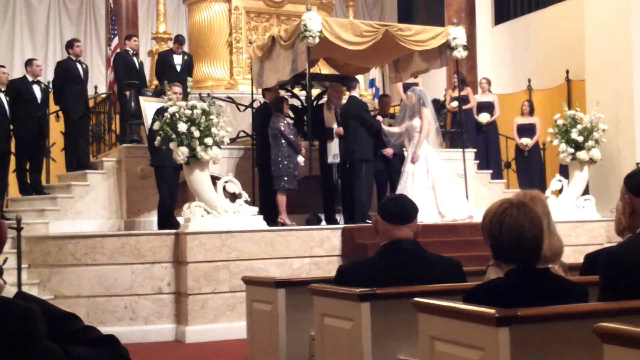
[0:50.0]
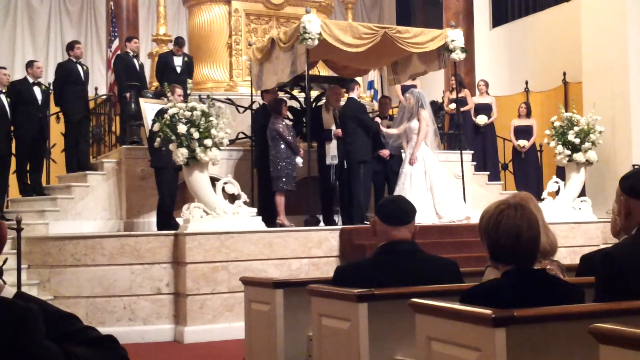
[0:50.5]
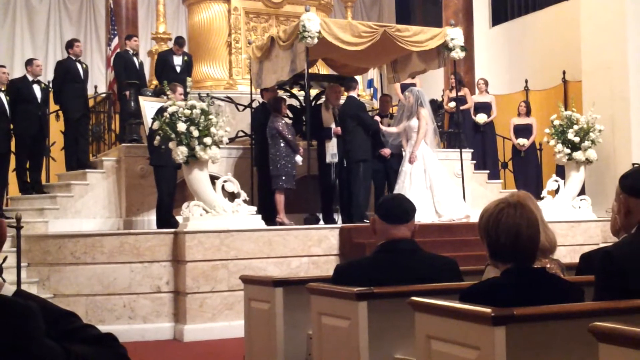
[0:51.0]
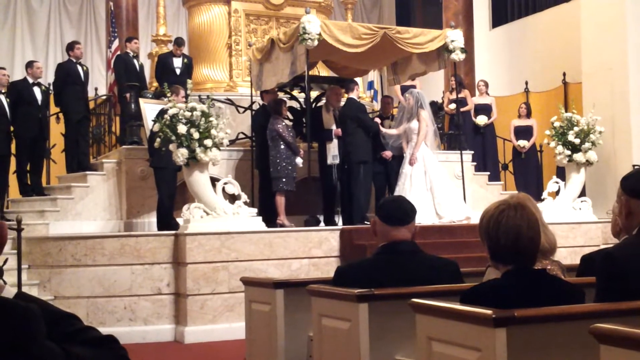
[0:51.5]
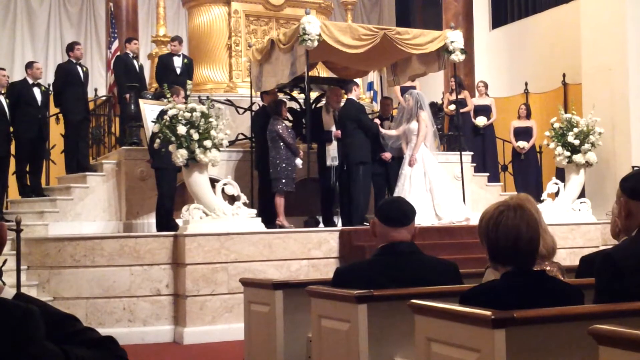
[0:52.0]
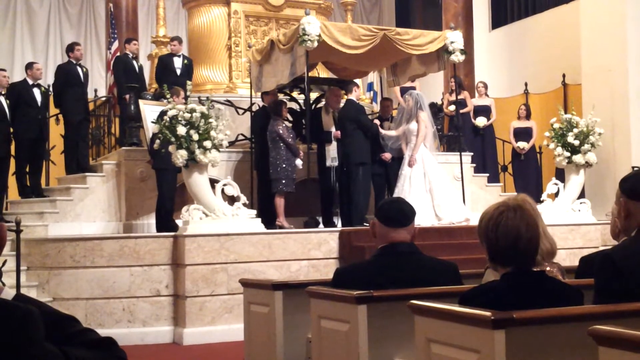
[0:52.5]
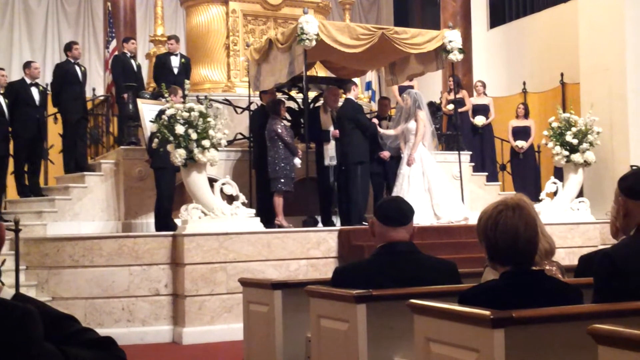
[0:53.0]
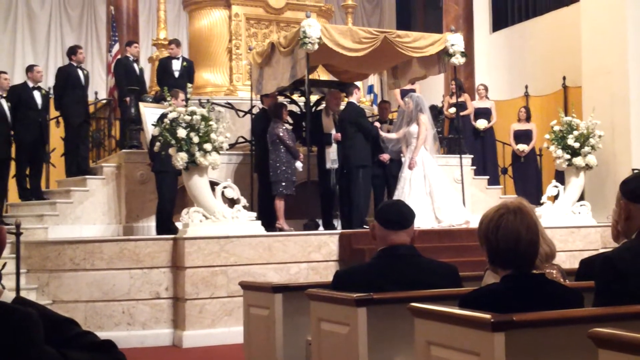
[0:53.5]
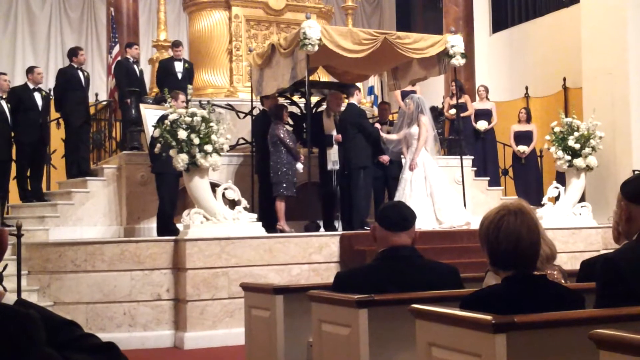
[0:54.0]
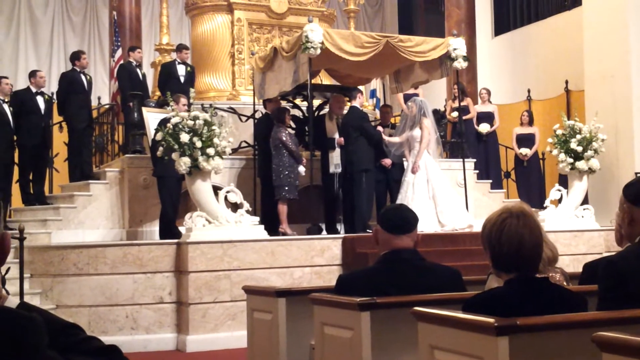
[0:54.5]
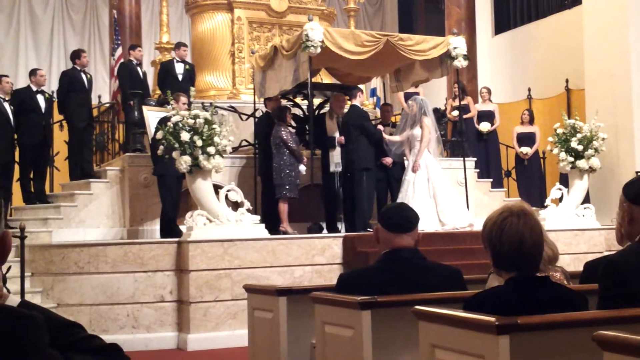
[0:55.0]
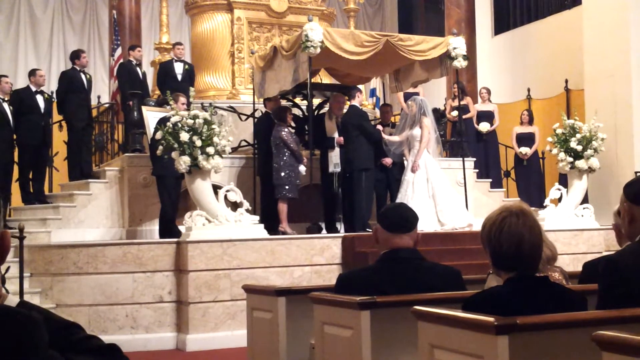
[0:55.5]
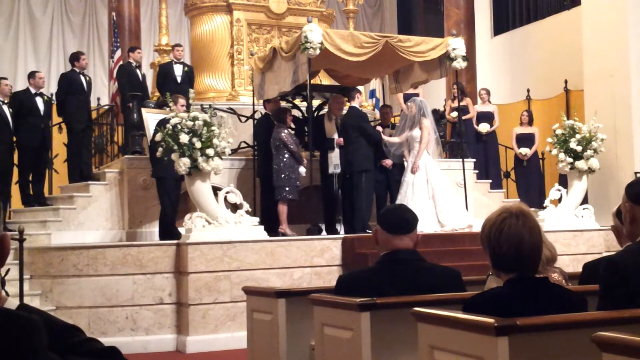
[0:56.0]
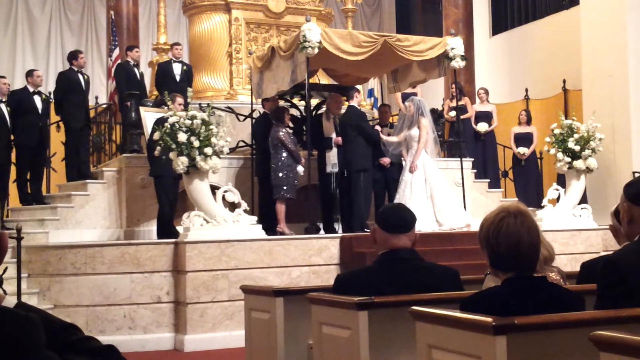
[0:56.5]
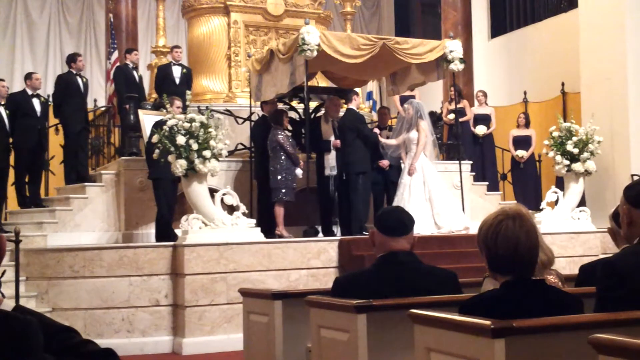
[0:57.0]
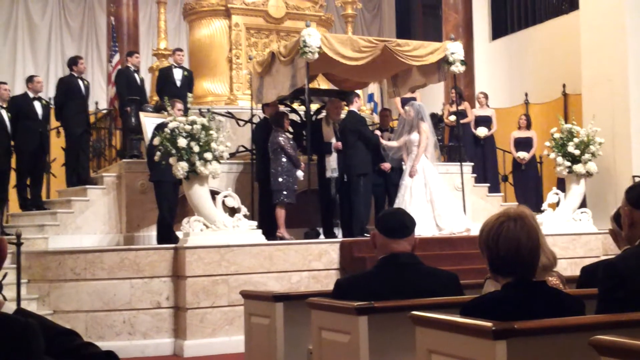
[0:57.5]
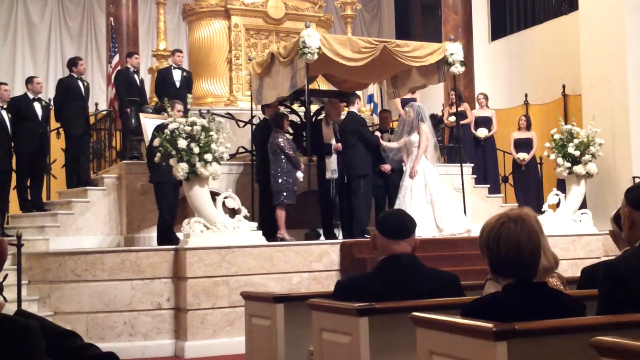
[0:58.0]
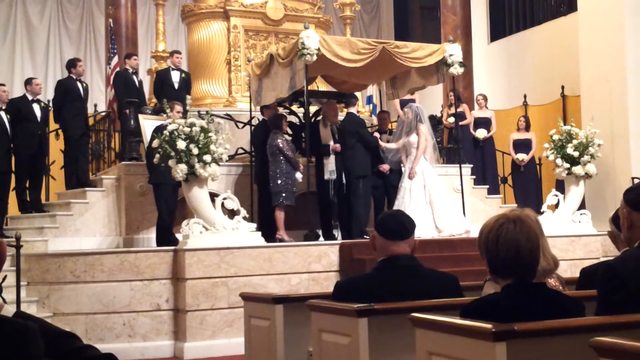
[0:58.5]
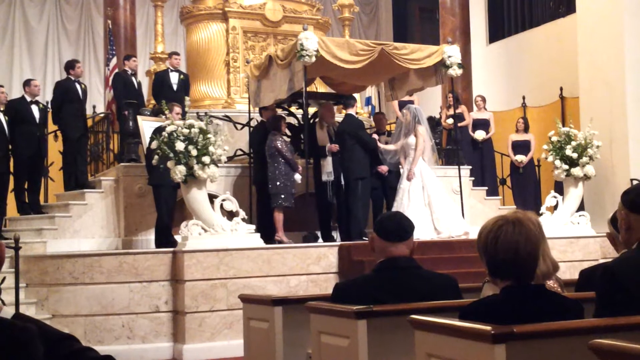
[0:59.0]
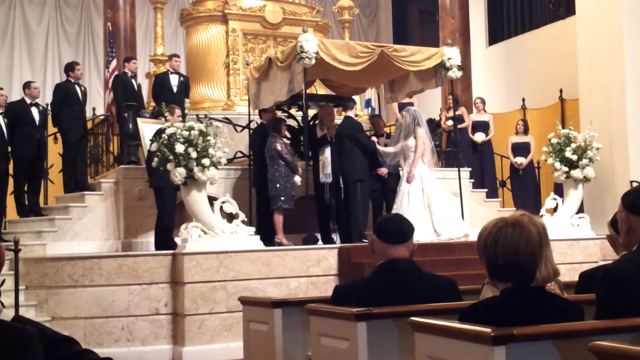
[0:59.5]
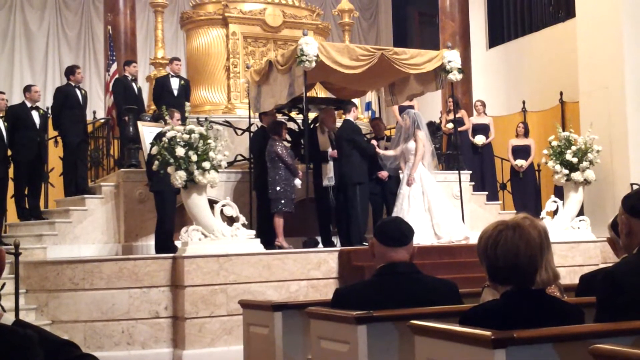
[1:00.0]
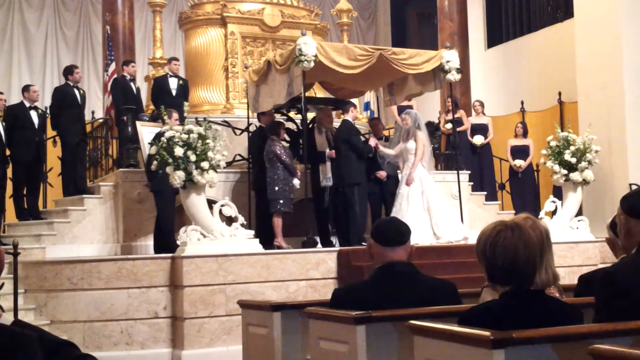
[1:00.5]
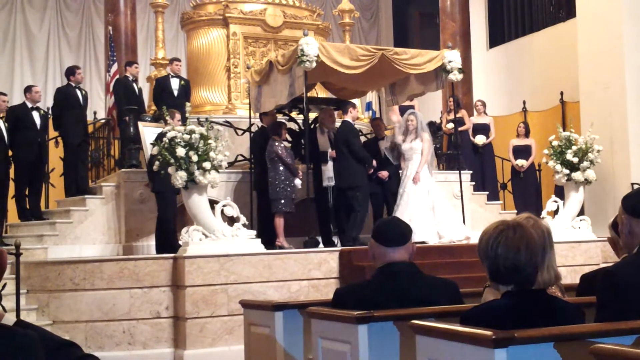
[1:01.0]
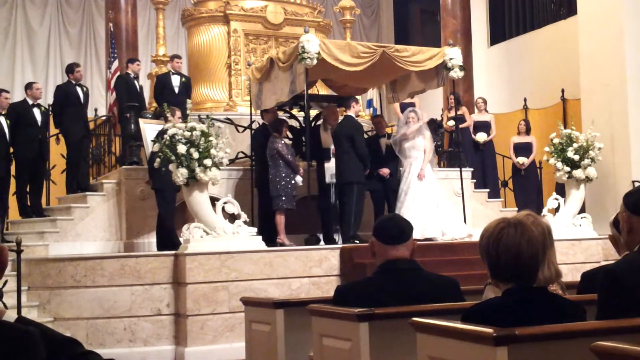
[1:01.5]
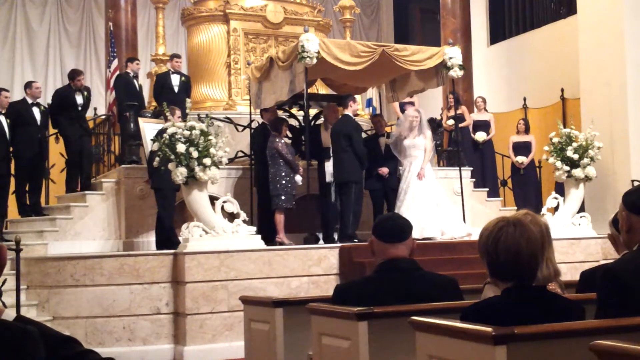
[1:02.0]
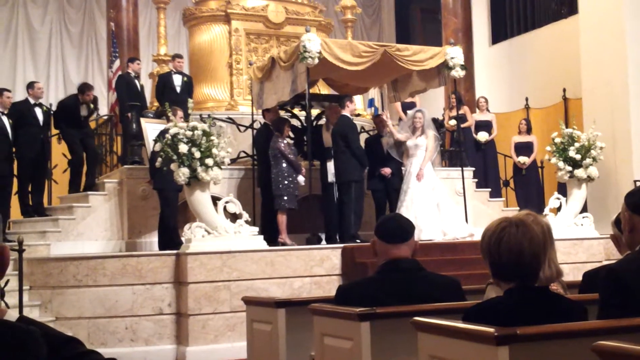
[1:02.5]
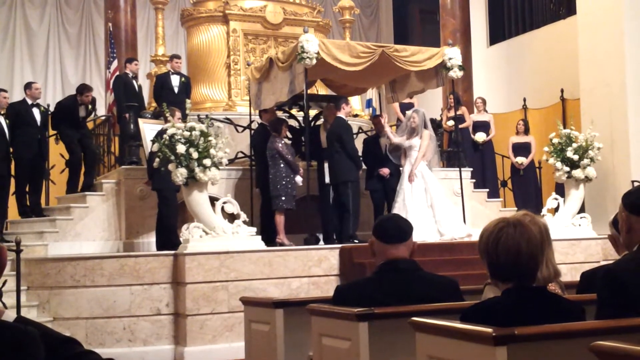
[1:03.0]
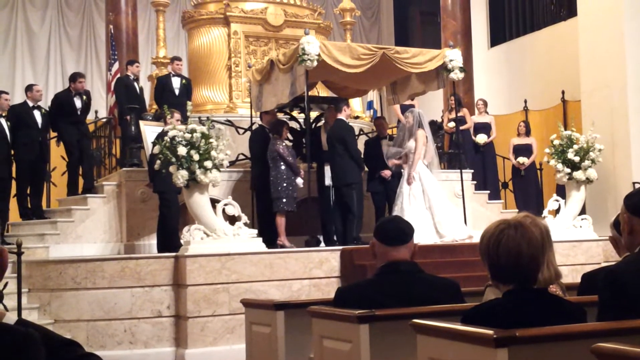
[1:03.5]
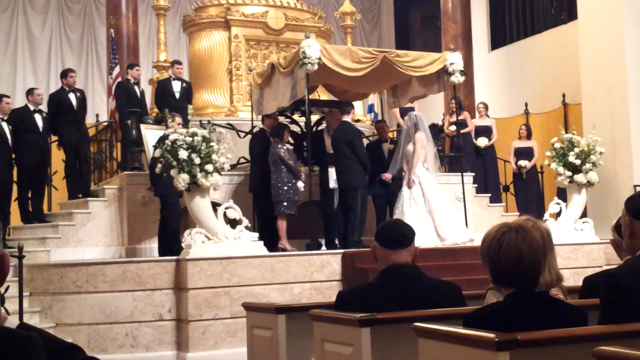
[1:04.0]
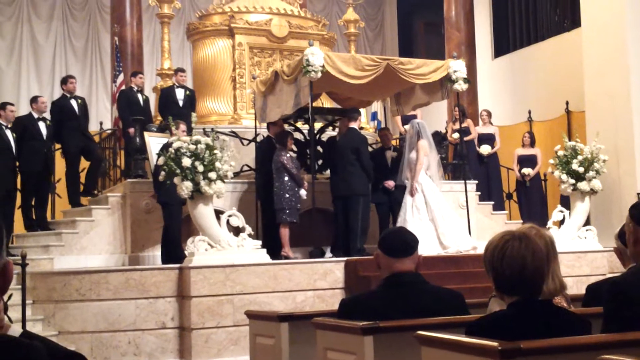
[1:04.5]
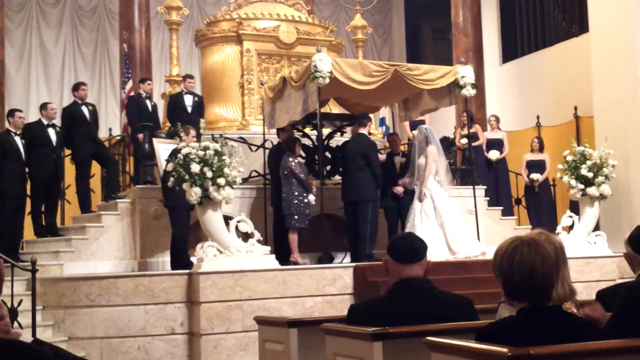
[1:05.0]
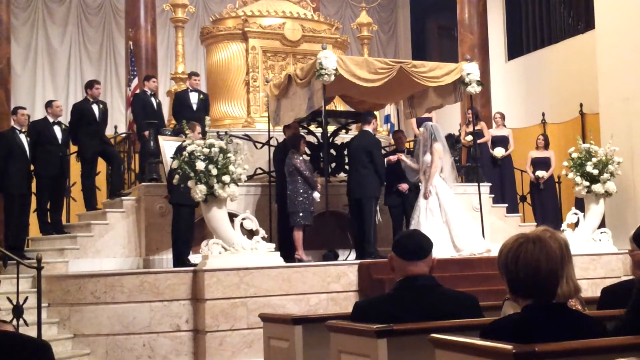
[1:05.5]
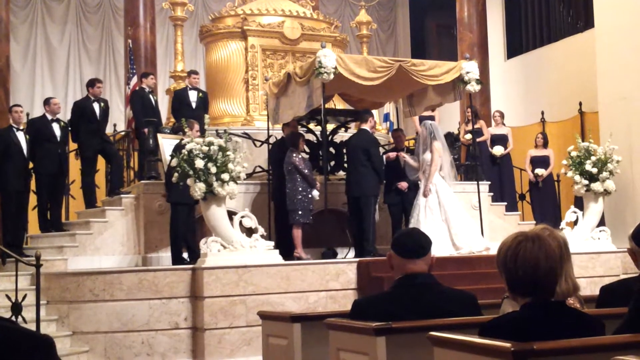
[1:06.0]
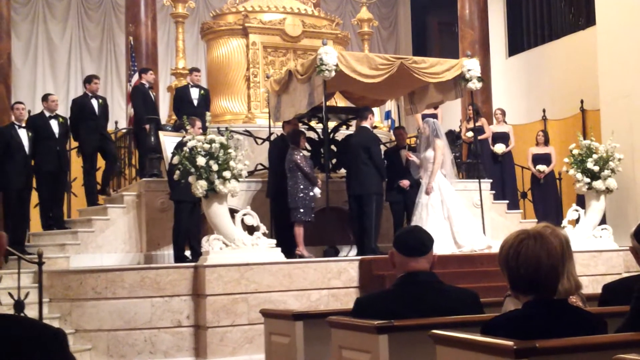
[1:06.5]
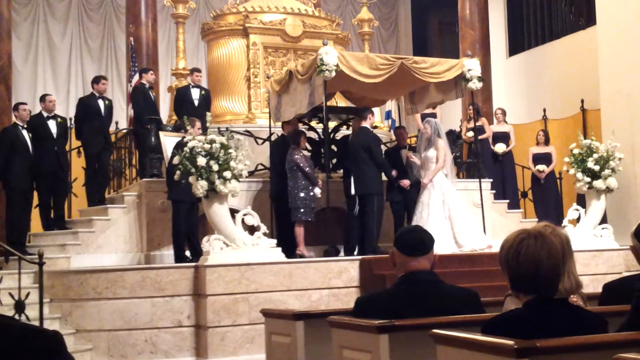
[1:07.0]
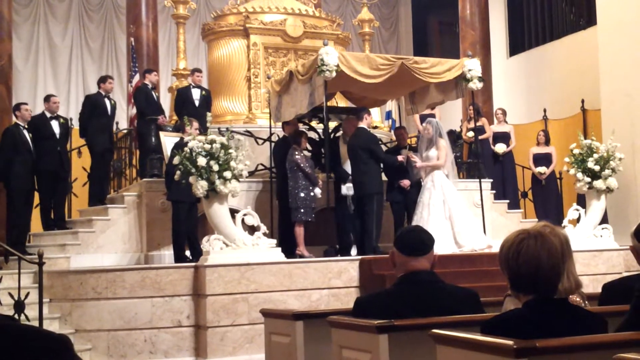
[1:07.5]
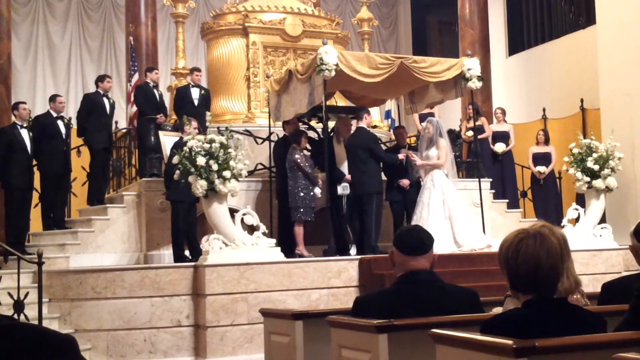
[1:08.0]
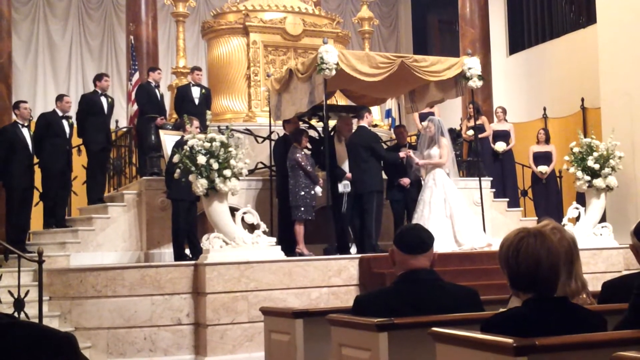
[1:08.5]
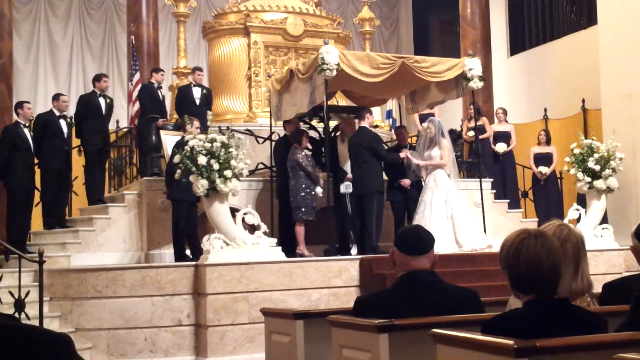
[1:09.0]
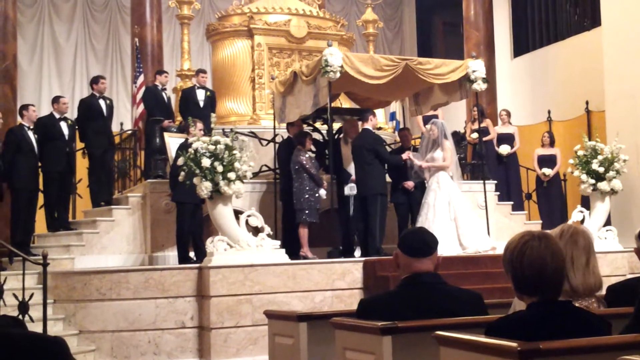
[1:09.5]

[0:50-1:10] The wedding ceremony in the church is seen from behind a few pews, with the camera angled towards the altar and a few people in the pews facing the altar. There is a red carpeted floor, with stone or marble stairs leading up to the altar. Off to the sides of the altar, stairs lead up and back, with the groomsmen on the stairs to the left and the bridesmaids on the stairs to the right. The altar is made up of a canopy with gold fabric, with some elegant vases with flowers off to the sides. Under the canopy, the minister faces the bride and groom, speaking and performing the ceremony. The groom in a black tux and the bride in a white gown and veil face each other, the bride's arm outstretched to the groom. A few other people are under the altar with them. The camera work is a bit shaky. The bride waves her hand towards the crowd, then takes something from the minister, likely a ring. The groom puts his hand out, and the bride starts to put the ring on his hand.